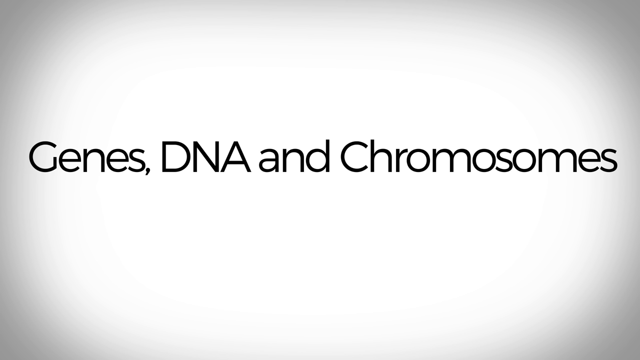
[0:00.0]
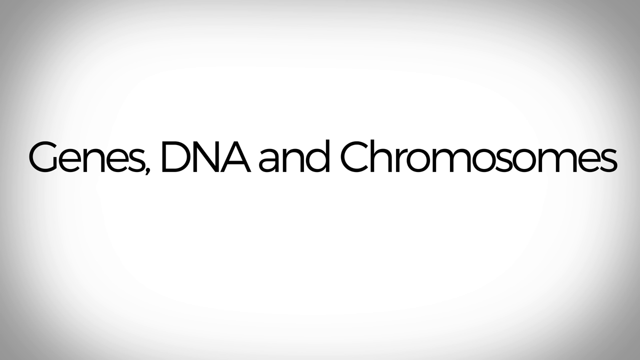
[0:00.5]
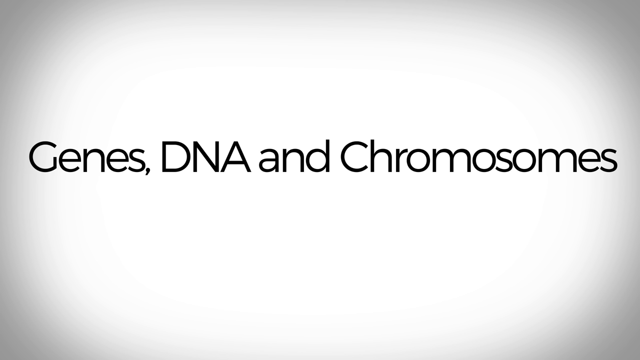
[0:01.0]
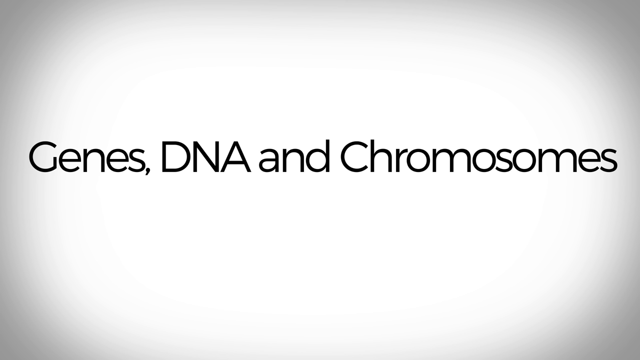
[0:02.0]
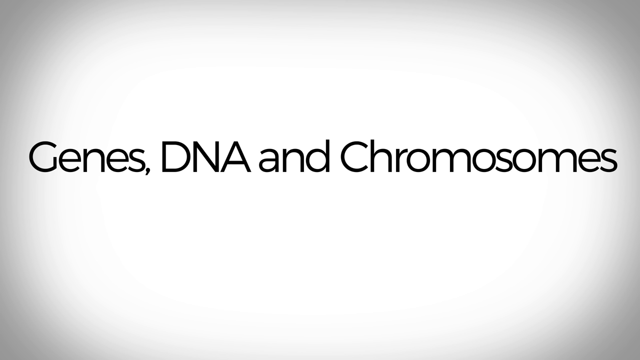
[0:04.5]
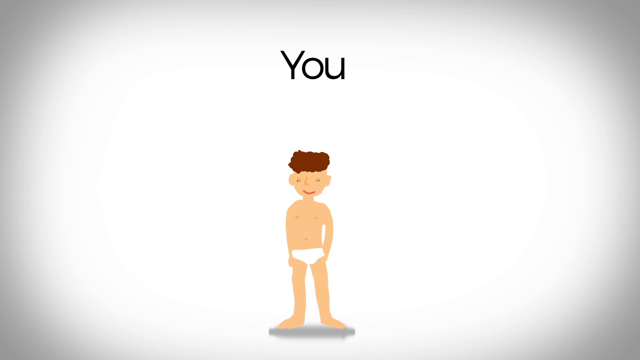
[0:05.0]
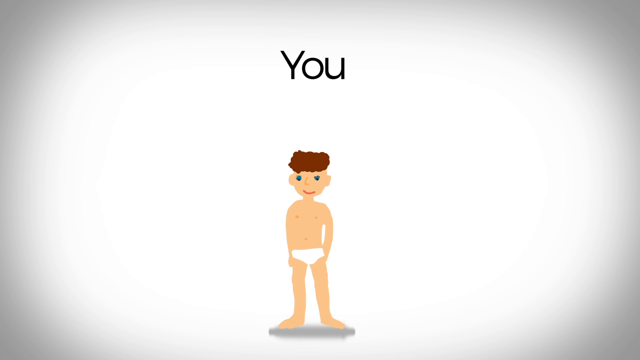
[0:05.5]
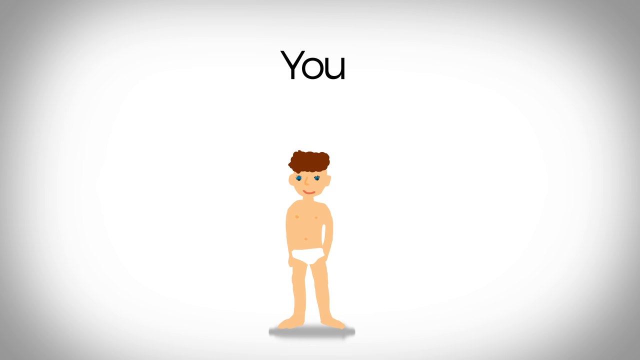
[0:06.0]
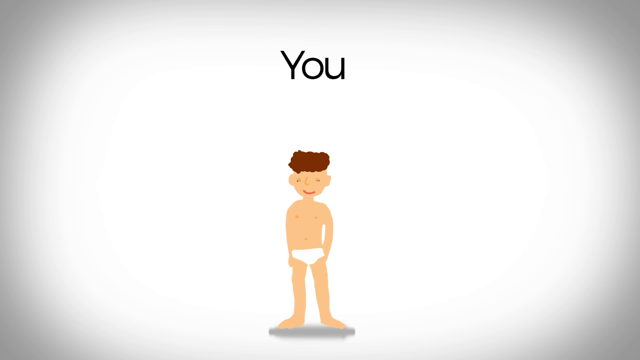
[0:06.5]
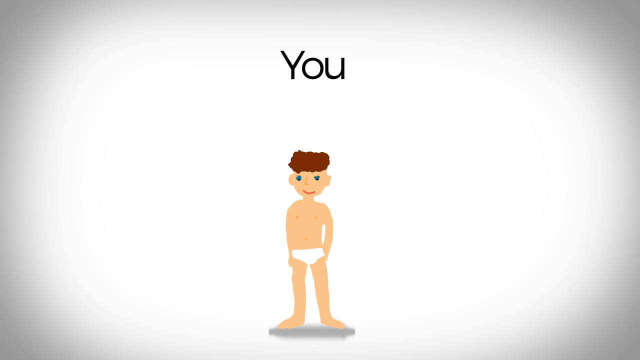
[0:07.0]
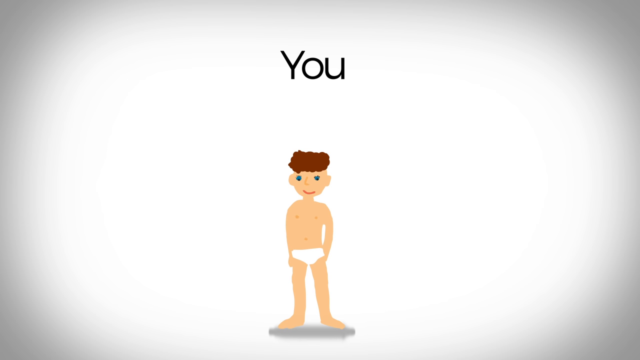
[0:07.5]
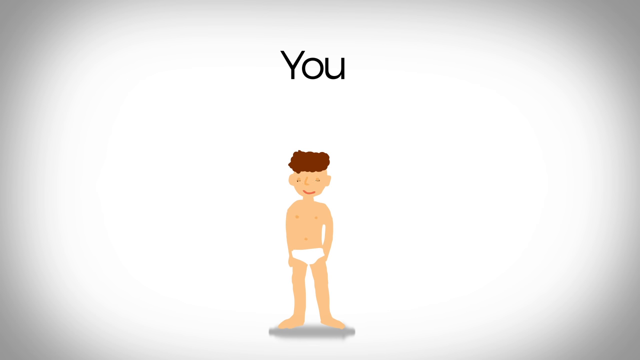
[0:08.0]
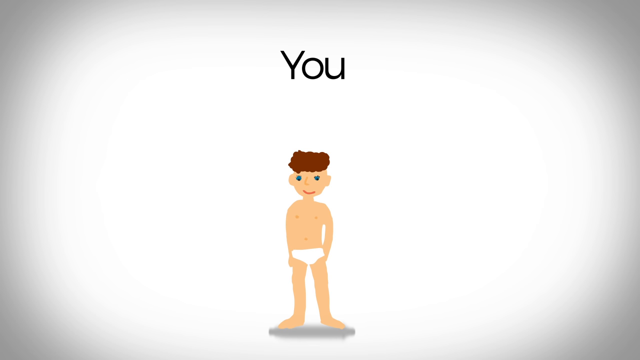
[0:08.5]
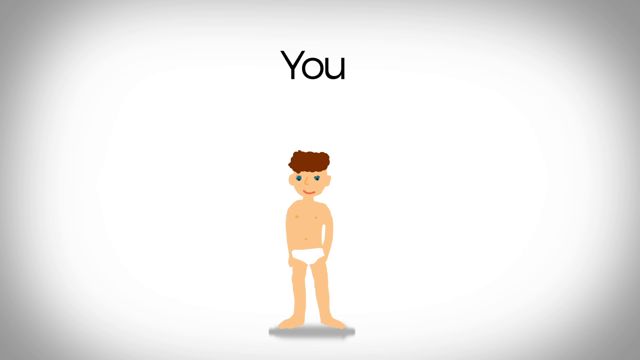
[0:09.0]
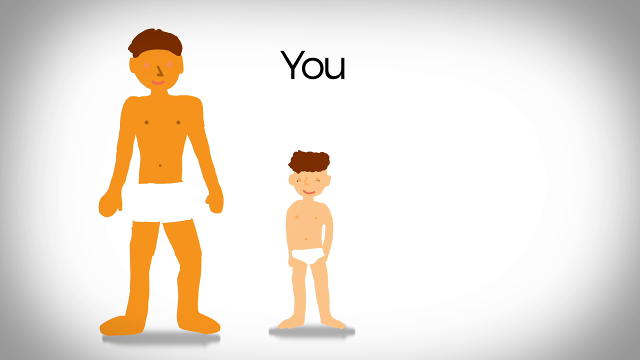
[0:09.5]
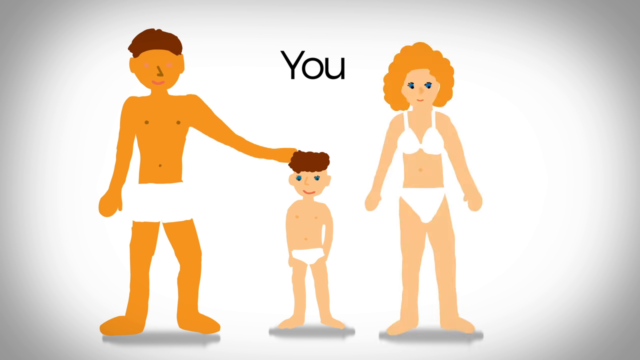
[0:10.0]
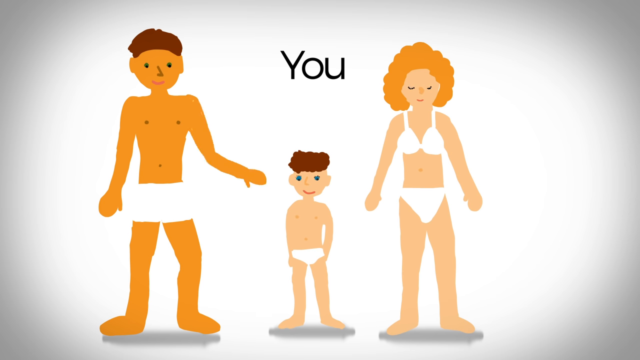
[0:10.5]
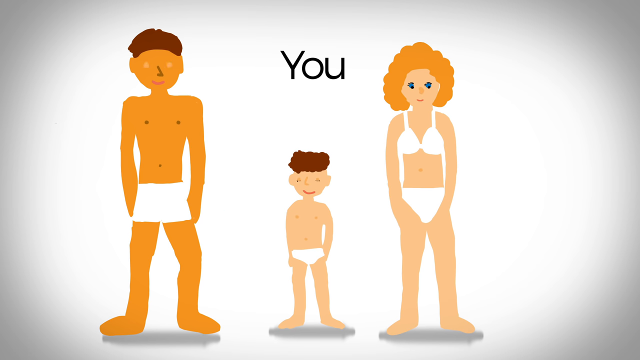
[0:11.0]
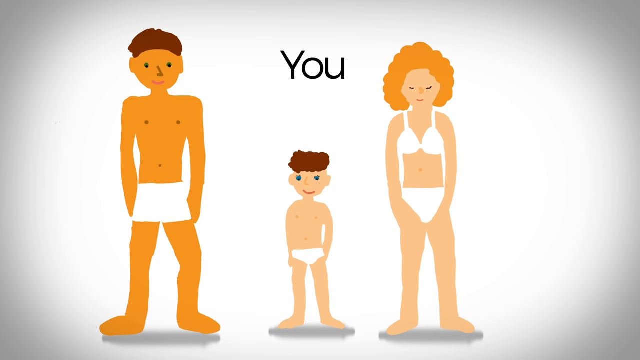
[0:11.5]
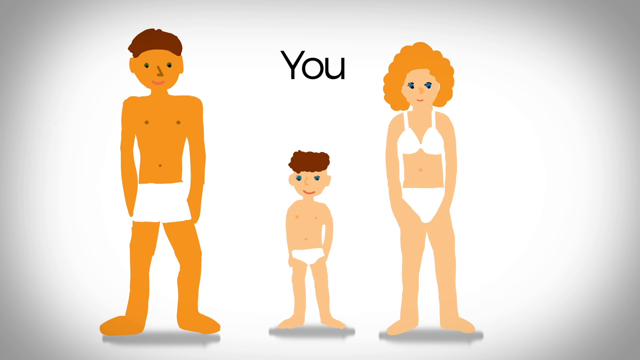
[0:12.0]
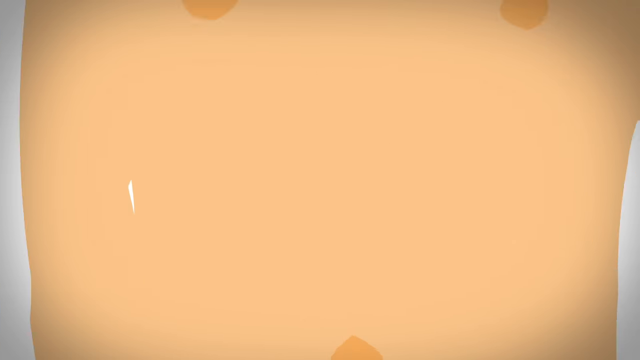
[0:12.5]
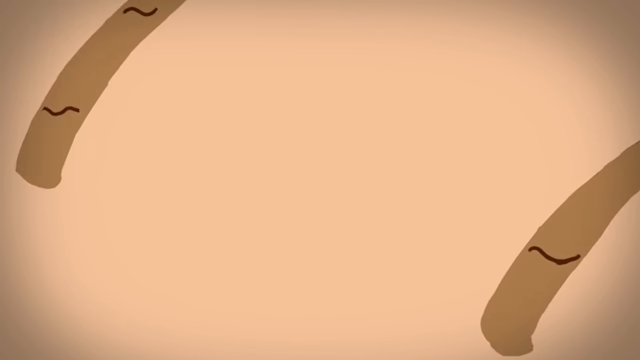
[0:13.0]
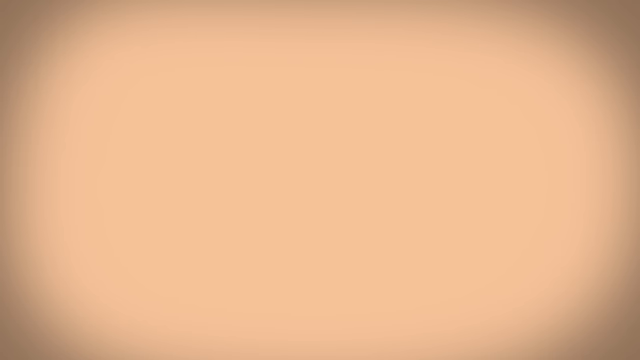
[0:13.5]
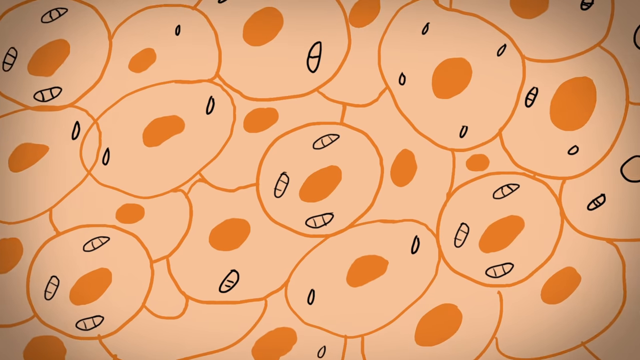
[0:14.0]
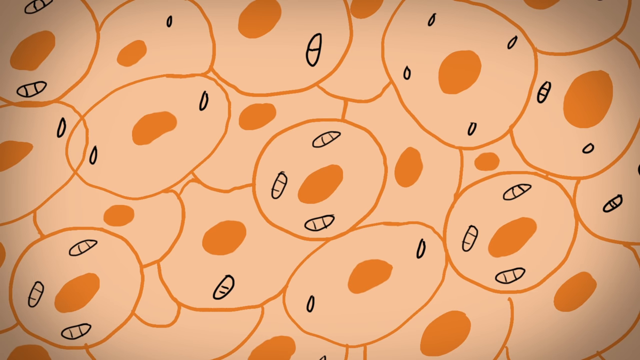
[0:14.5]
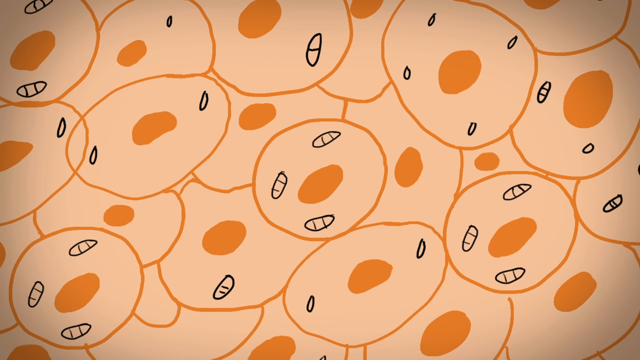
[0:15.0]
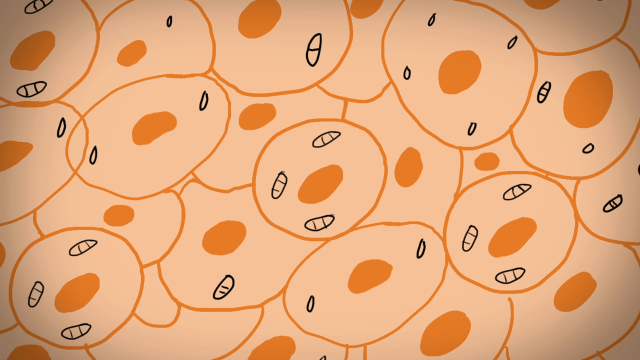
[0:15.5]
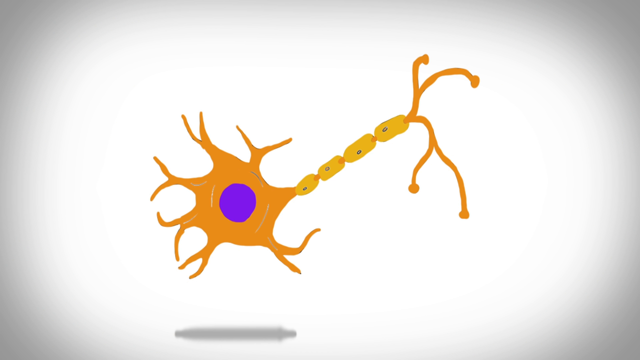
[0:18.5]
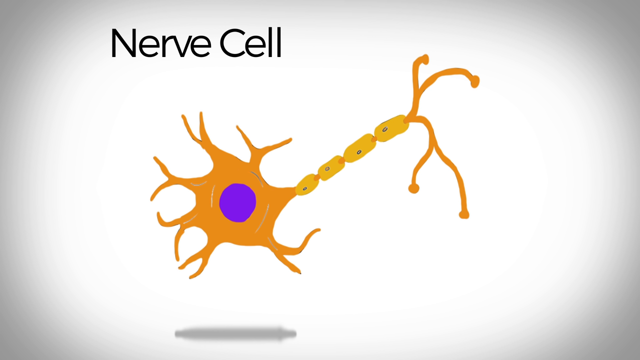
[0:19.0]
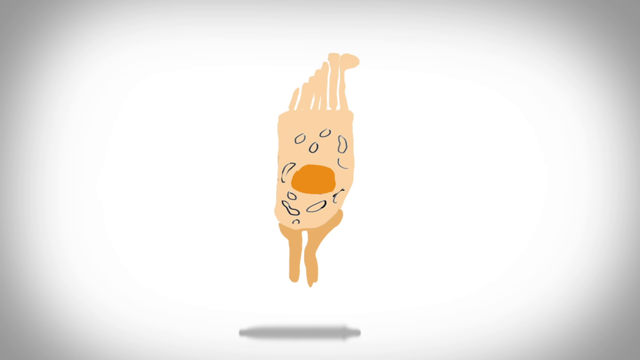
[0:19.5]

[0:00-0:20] The video opens on a white screen that is slightly dark around the edges, with "genes, DNA, and chromosomes" in black letters in the center. A colored picture of a white boy follows. He has brown hair on the top of his head and blue eyes that blink, and he is in his underwear. Above him, "you" appears in black letters. A picture of a man appears next to him; the man has green eyes and the same kind of haircut, with hair just on the top of his head, and he is in his underwear too. Both face the camera. The man, on the left of the boy, reaches out his left hand and puts it on the boy's head. A picture of a woman then appears on the right side of the screen. She wears a bra and underwear and has kind of fluffy light brown hair and blue eyes. All of them are blinking. The view then zooms in on what may be the man's chest, showing some hairs, then some skin cells and a nerve cell.